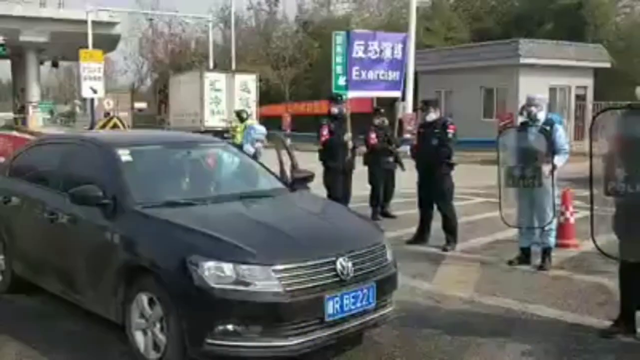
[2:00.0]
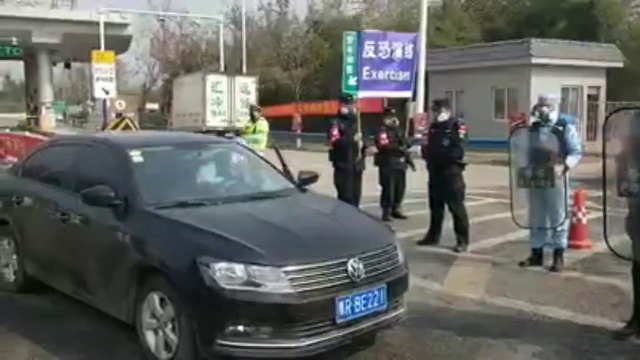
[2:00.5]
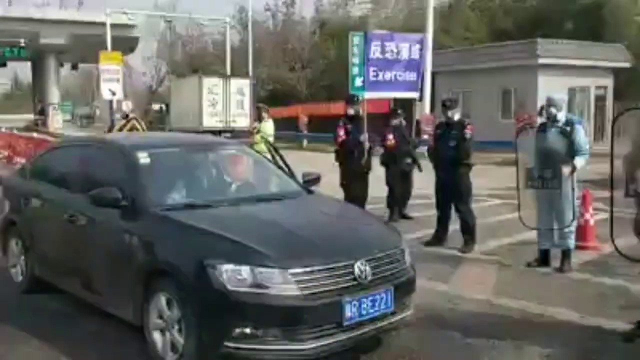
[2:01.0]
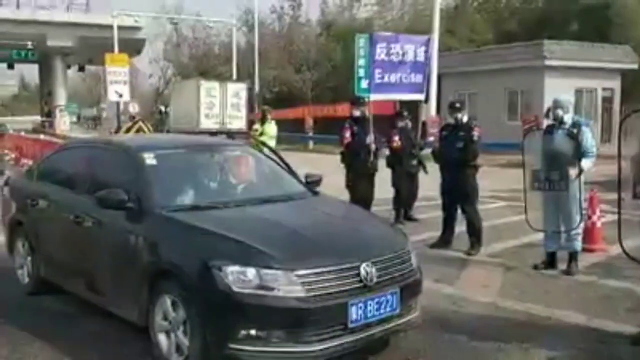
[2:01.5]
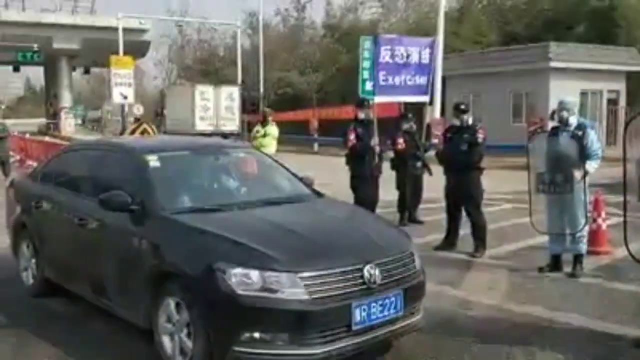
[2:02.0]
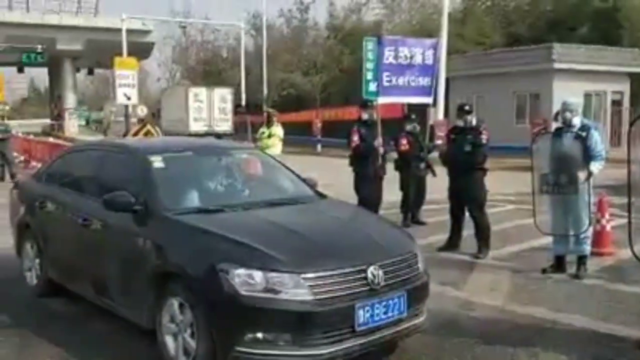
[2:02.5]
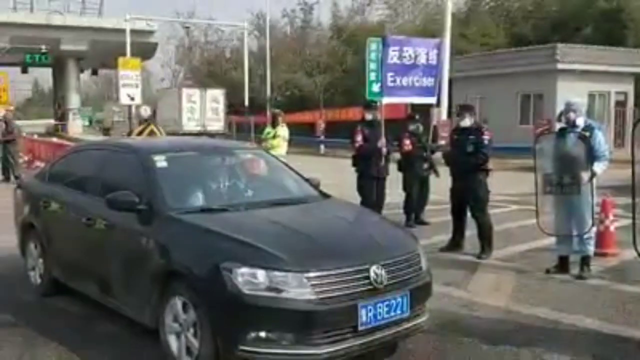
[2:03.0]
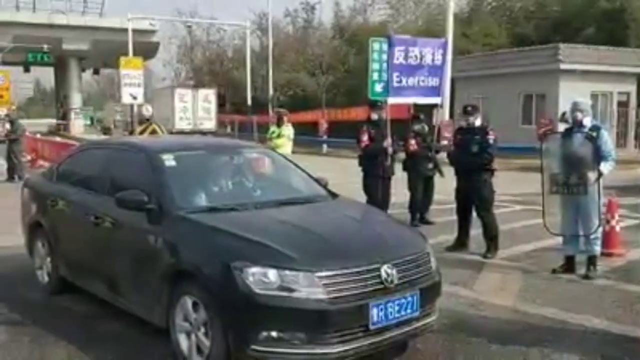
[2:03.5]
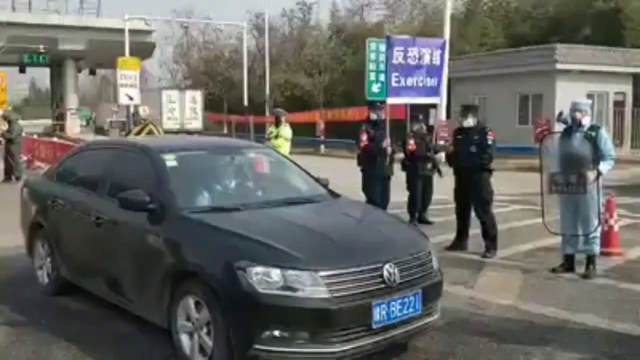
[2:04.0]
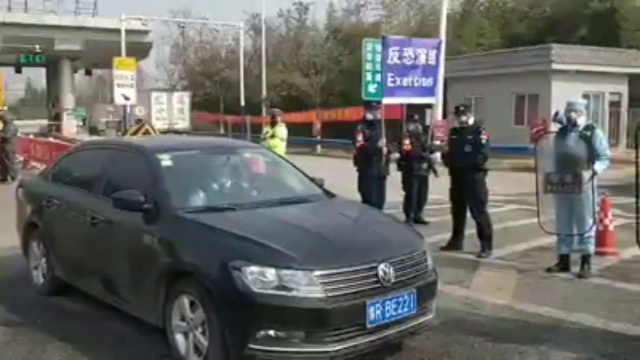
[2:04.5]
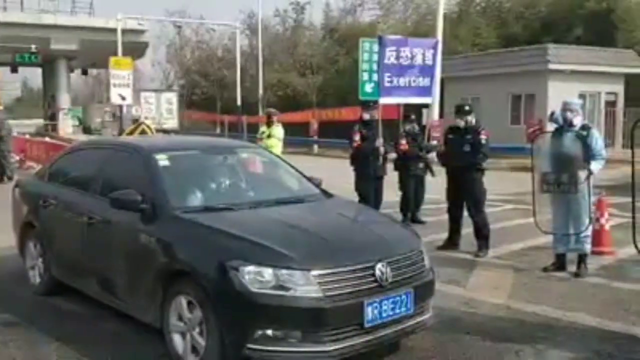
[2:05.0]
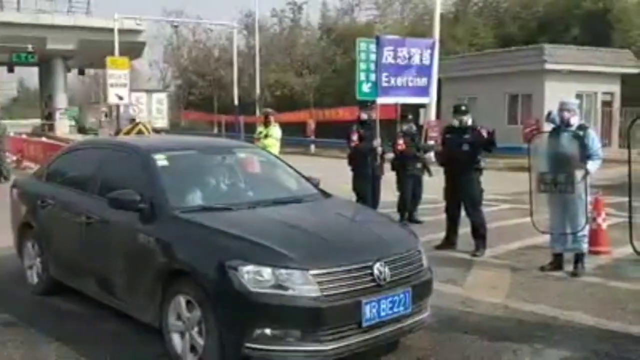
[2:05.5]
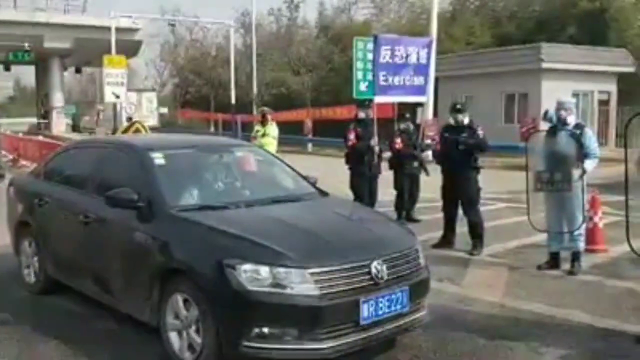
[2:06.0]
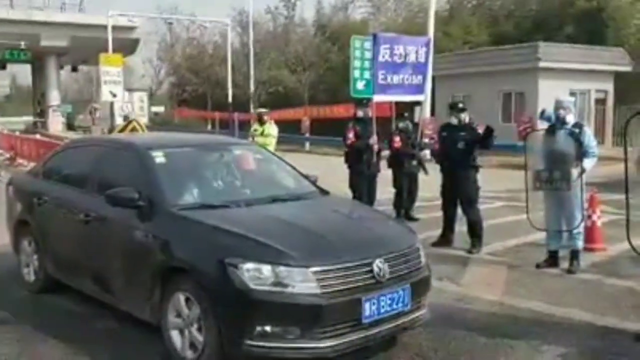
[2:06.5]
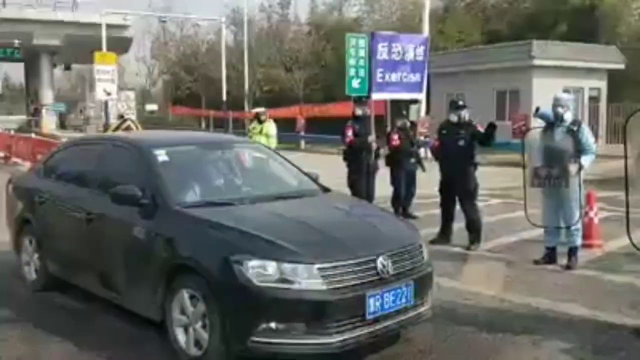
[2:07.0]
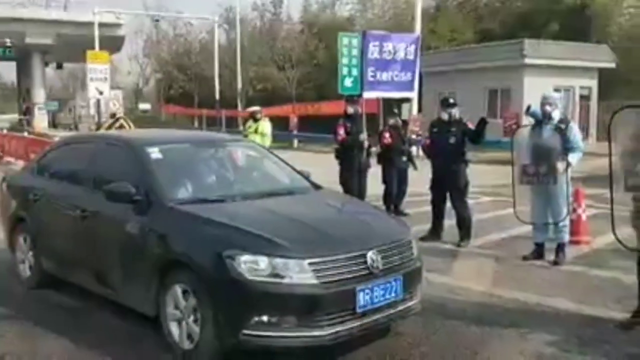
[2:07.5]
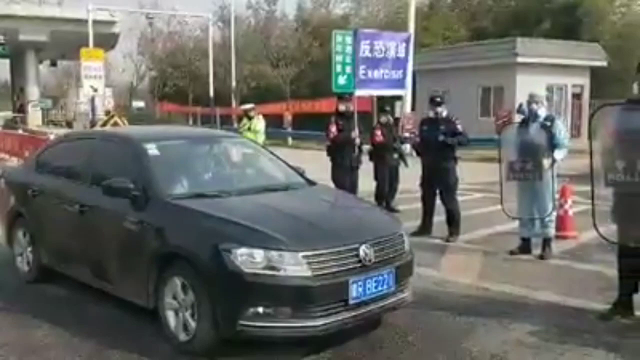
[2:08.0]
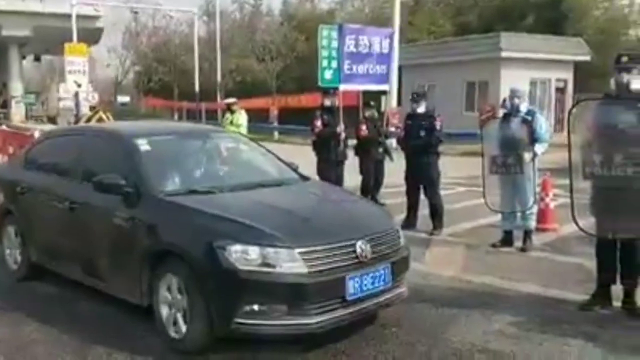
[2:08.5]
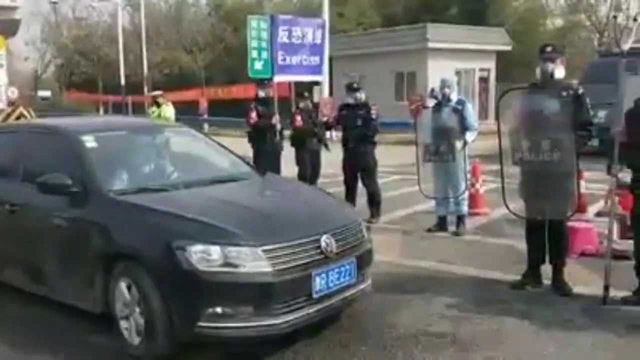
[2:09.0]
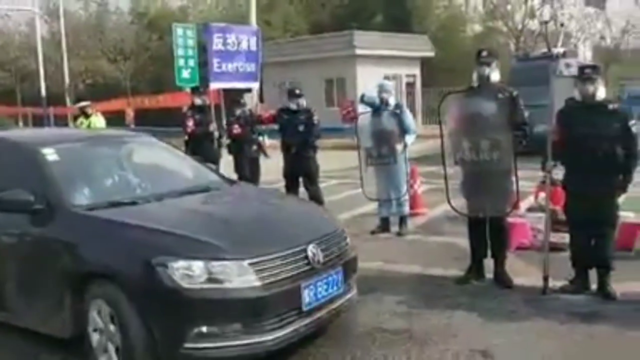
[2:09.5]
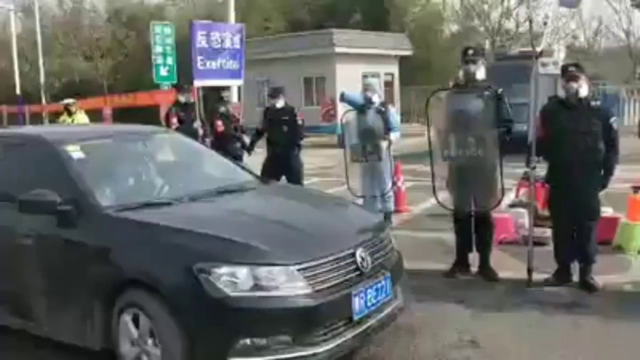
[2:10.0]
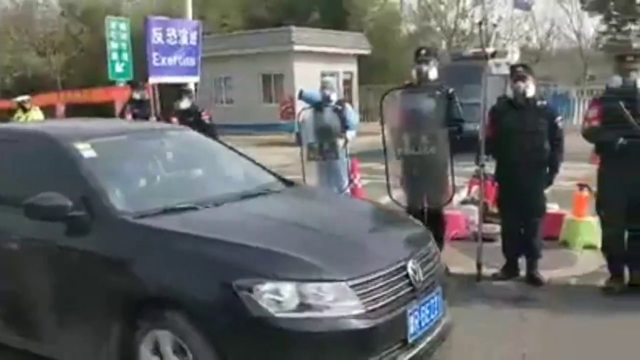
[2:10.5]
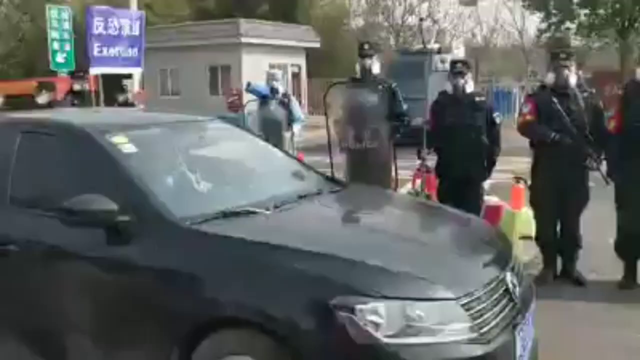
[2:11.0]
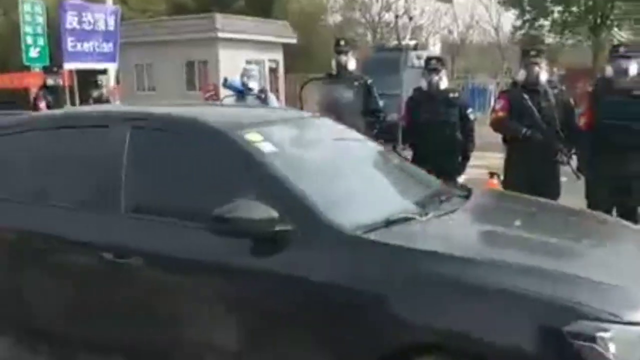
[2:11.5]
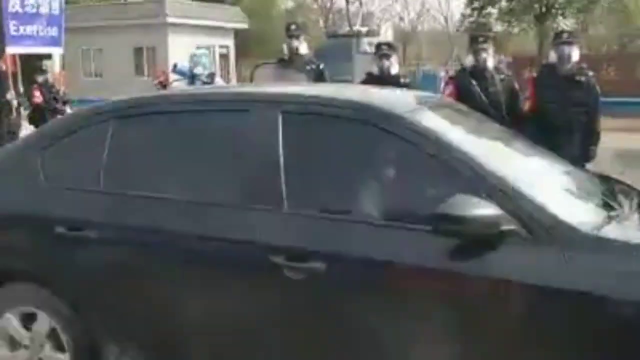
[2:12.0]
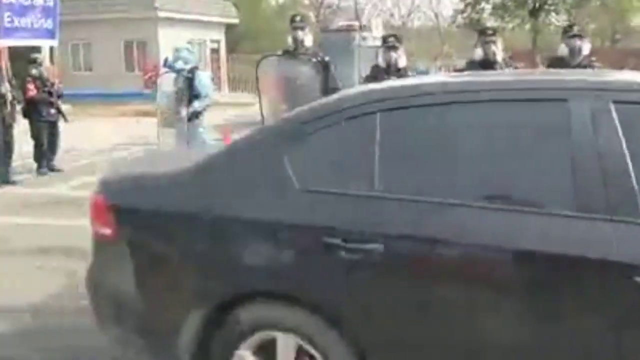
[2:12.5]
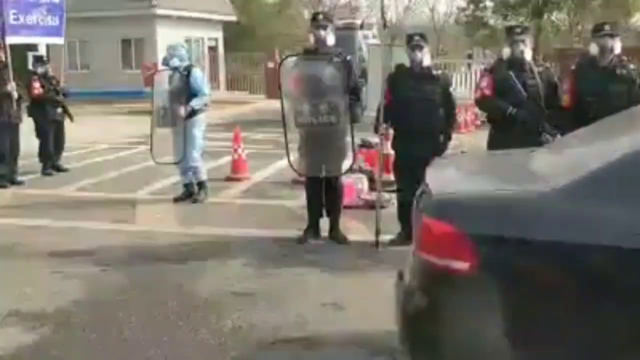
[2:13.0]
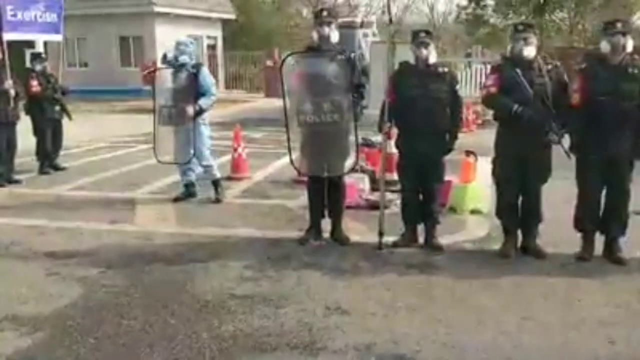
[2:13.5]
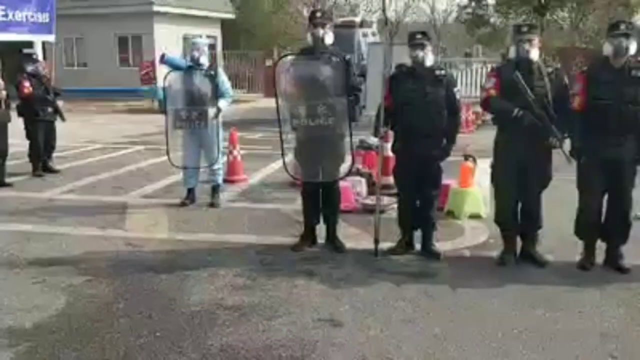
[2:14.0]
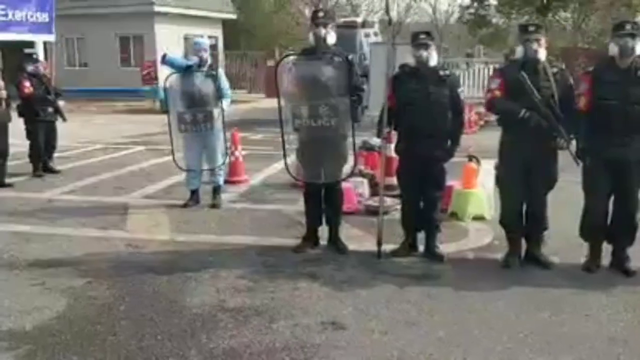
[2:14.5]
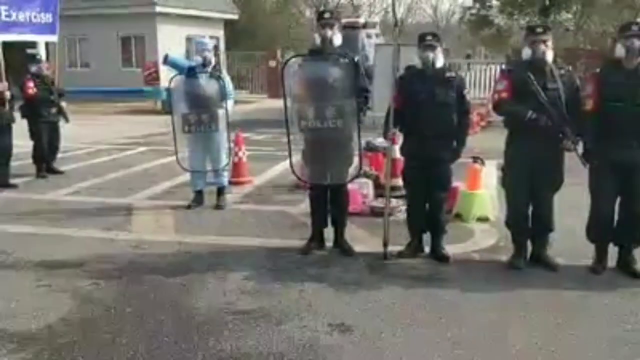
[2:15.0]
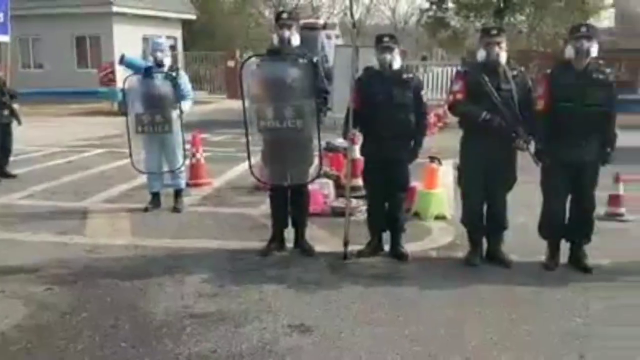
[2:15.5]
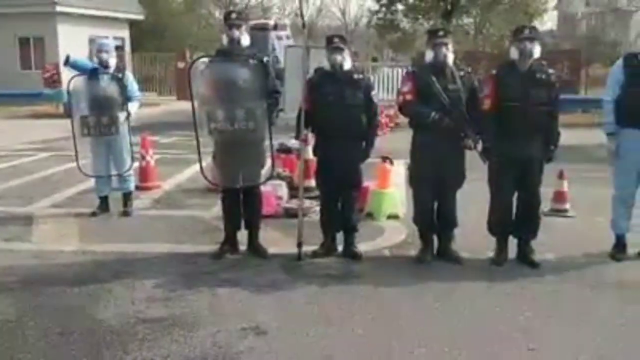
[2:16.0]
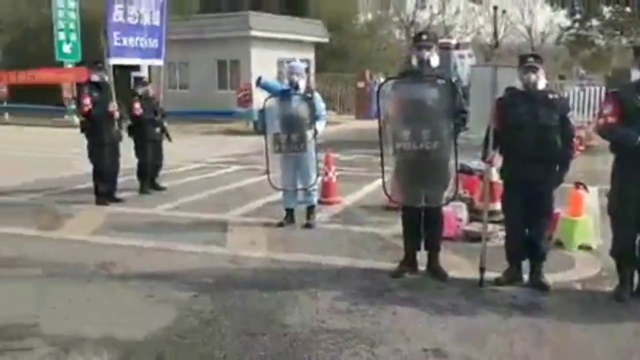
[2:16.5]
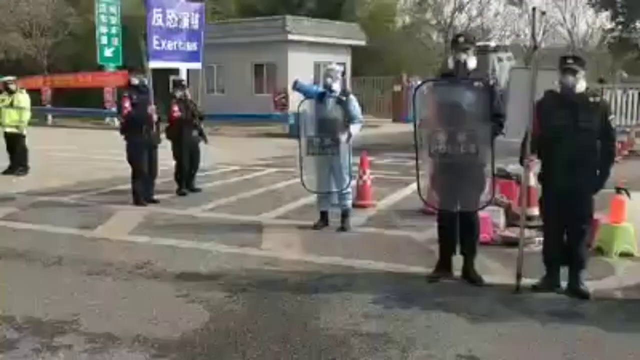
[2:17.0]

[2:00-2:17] A car travels from the left to the right side of the screen. Multiple people who appear to be police officers stand around the car, some with shields and some with guns. There is an overpass on the left-hand side and a sign with some sort of Asian writing on it to the right. A person gets into the car through the driver's side door and slowly starts to drive off toward the right-hand side. The officers just stand around with their guns and shields. Little can be seen of the person getting into the vehicle other than a light-colored long-sleeved shirt with a black vest. The car has a rectangular blue license plate with numbers on it. A box truck in the background travels in the opposite direction. Some of the officers wear black with caps, and others wear light-colored full-body jumpsuits.